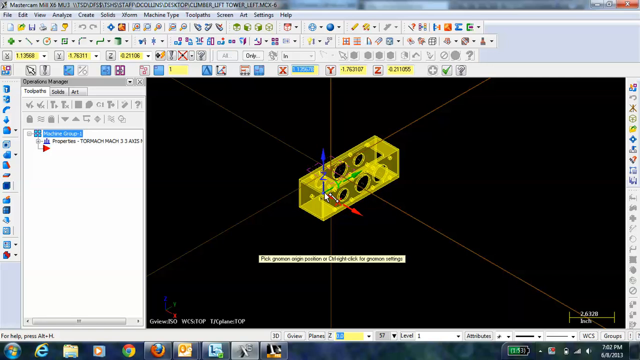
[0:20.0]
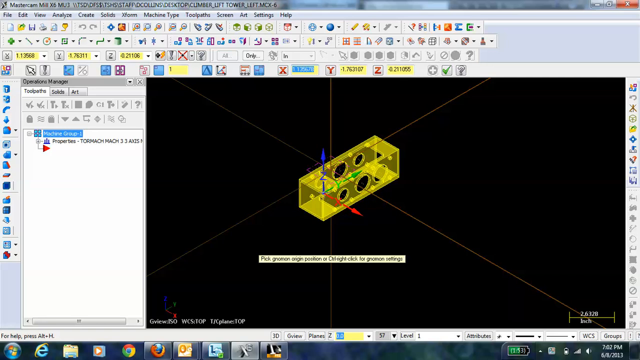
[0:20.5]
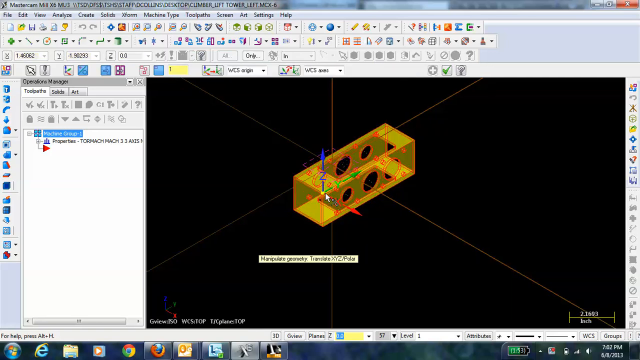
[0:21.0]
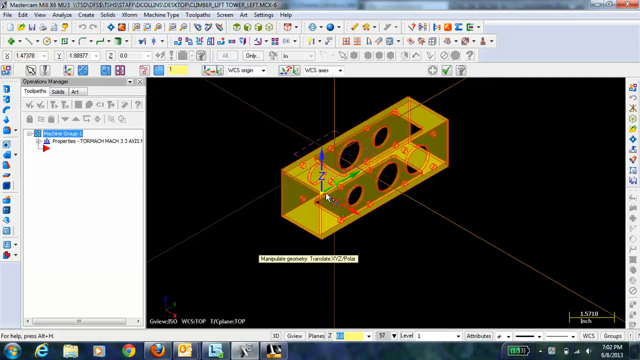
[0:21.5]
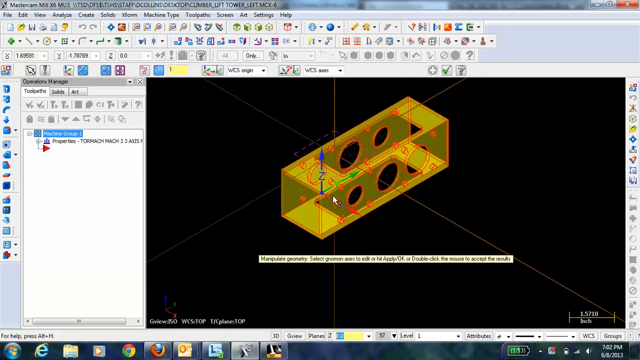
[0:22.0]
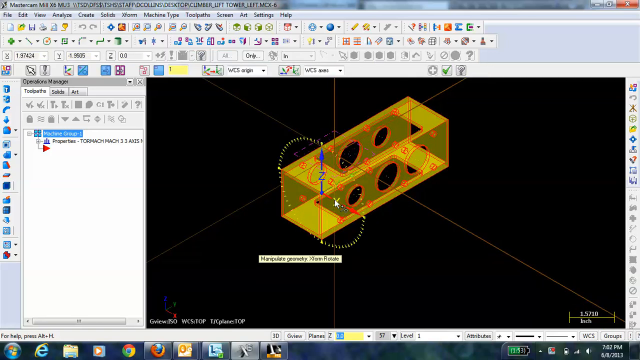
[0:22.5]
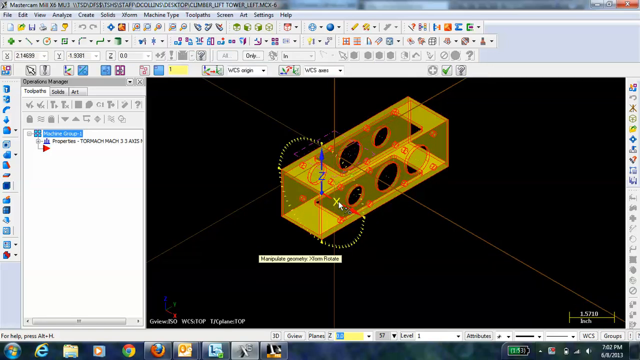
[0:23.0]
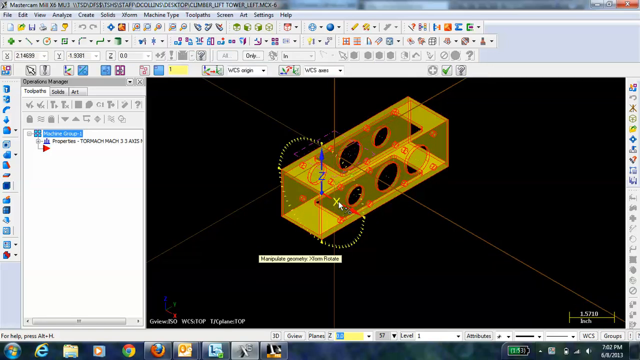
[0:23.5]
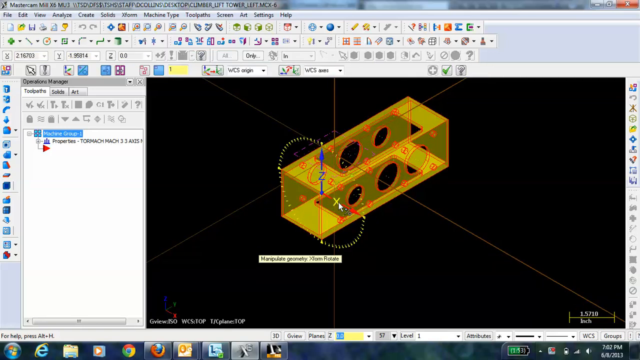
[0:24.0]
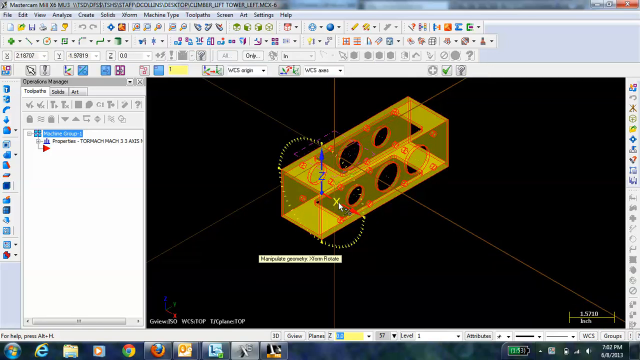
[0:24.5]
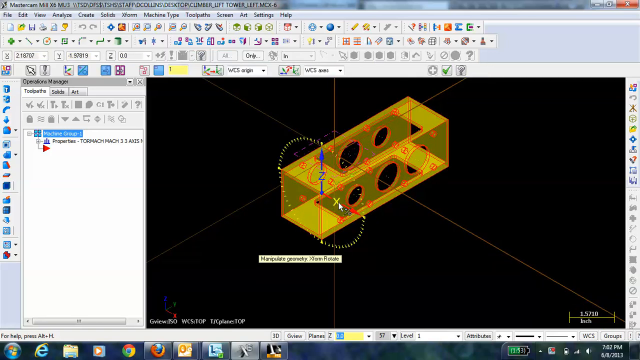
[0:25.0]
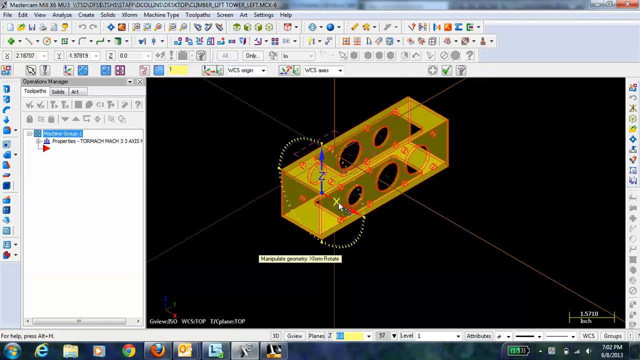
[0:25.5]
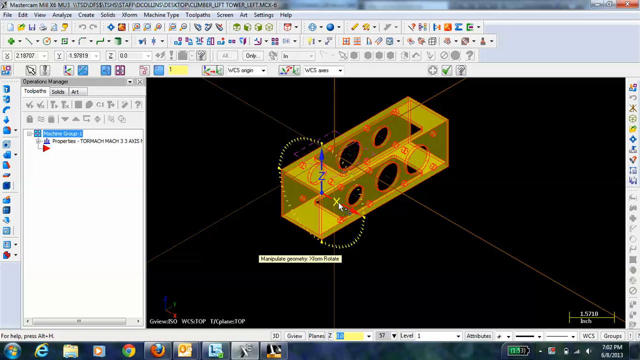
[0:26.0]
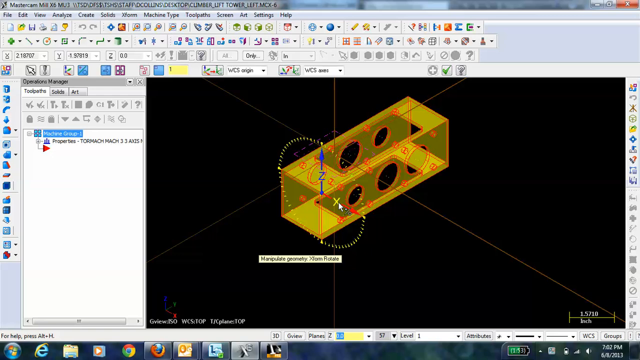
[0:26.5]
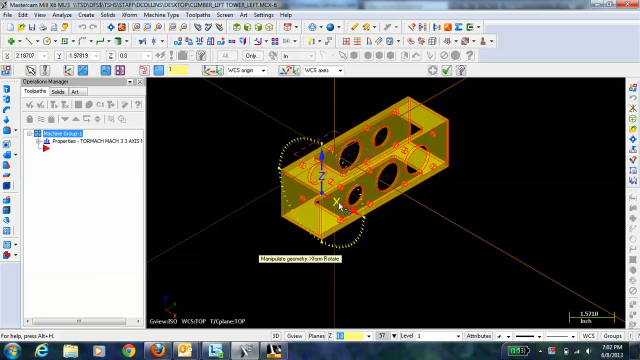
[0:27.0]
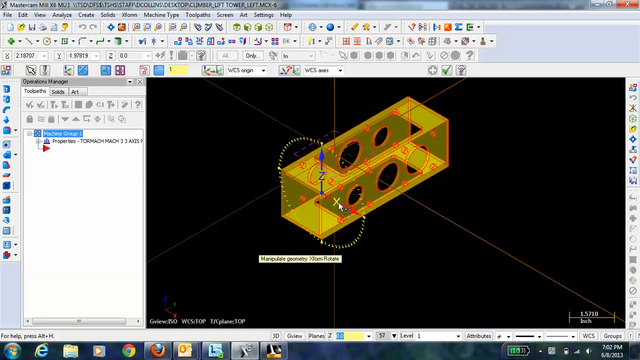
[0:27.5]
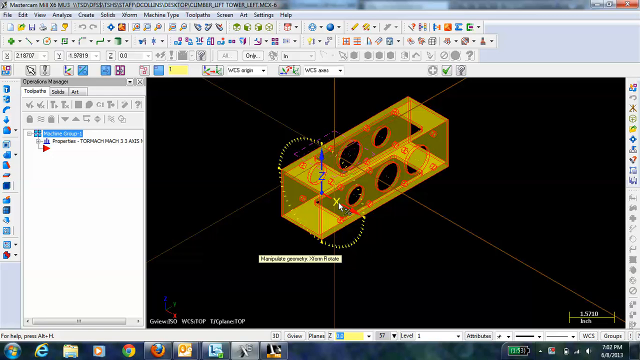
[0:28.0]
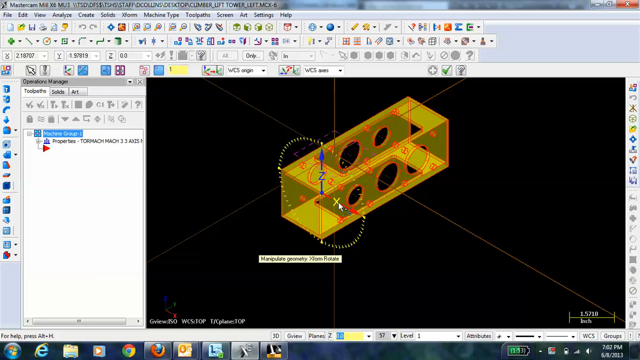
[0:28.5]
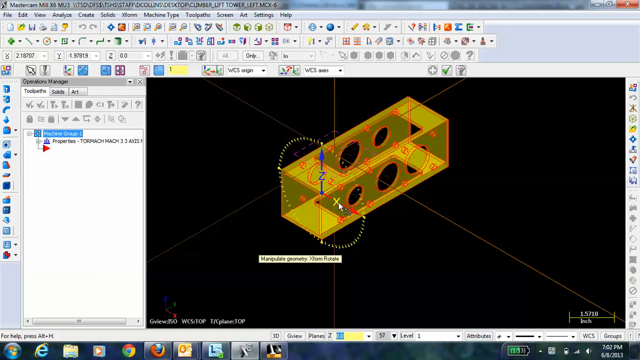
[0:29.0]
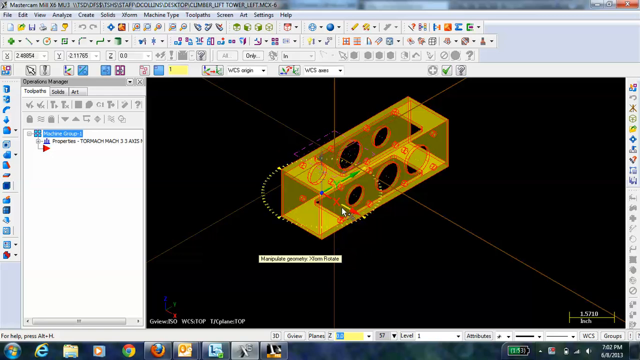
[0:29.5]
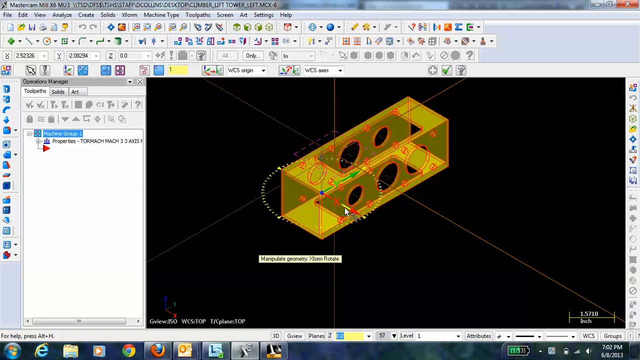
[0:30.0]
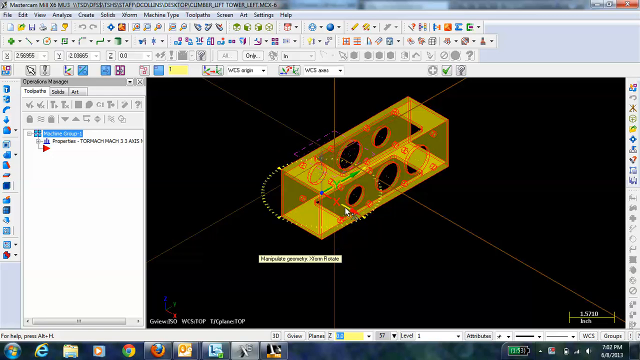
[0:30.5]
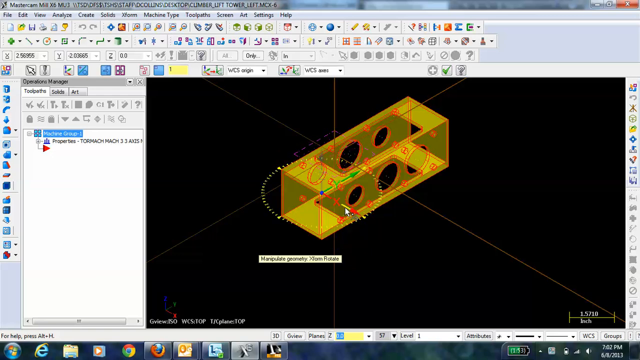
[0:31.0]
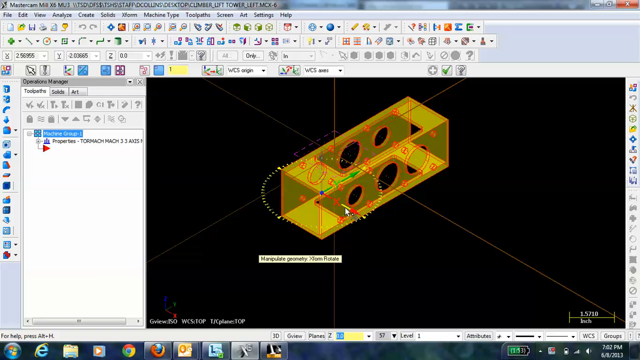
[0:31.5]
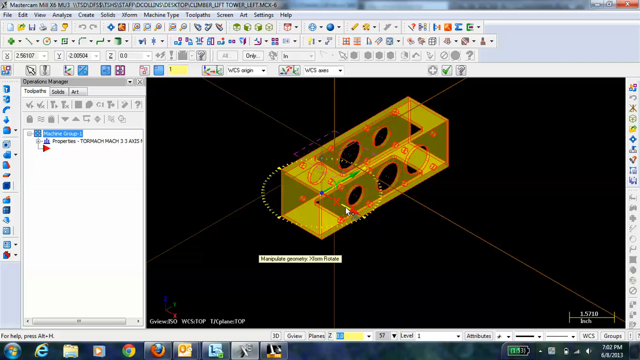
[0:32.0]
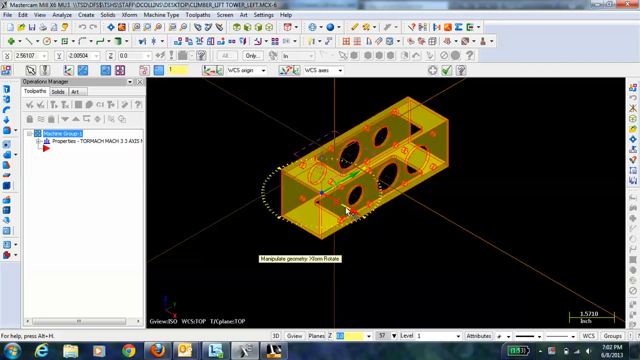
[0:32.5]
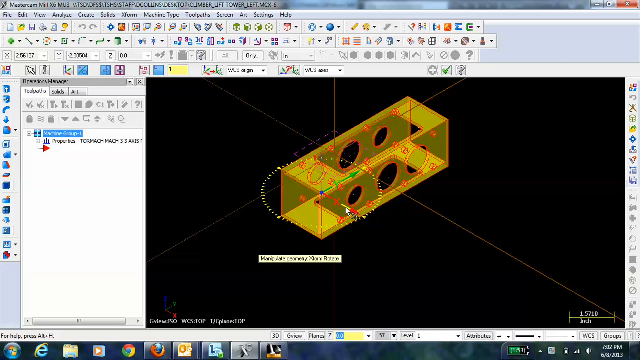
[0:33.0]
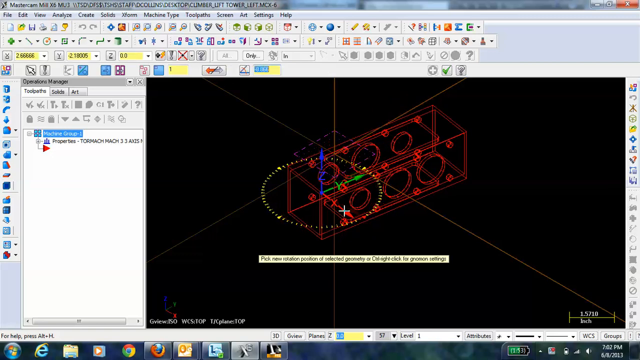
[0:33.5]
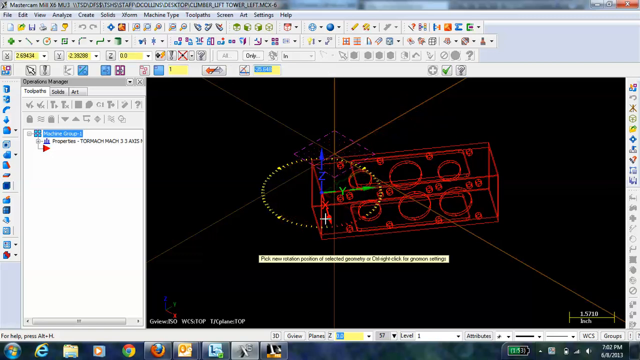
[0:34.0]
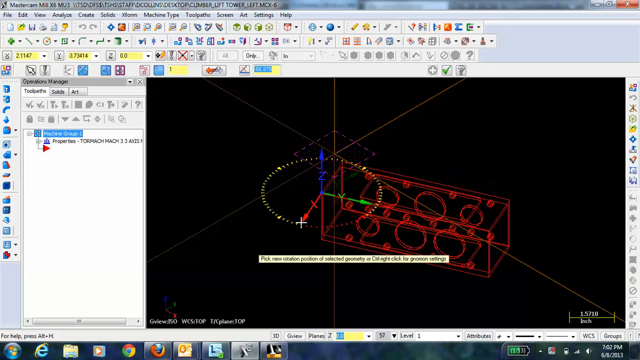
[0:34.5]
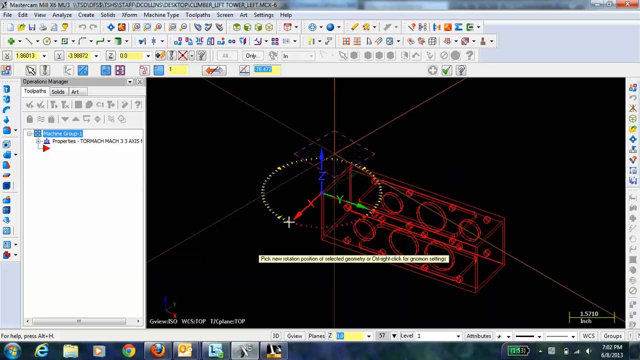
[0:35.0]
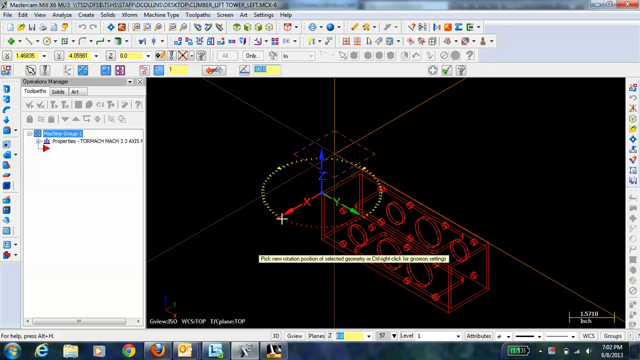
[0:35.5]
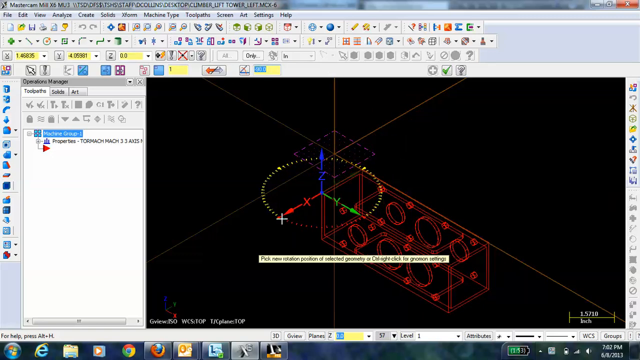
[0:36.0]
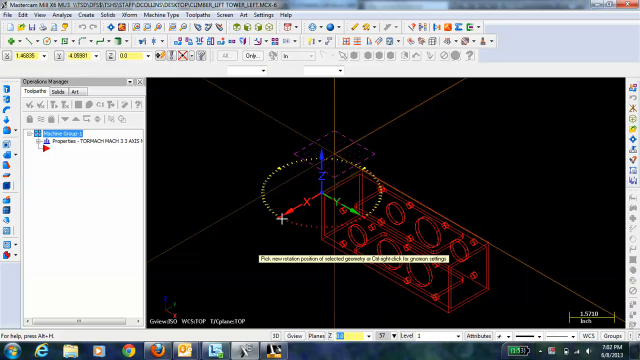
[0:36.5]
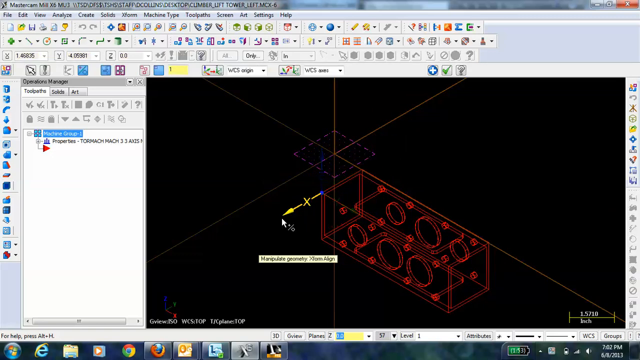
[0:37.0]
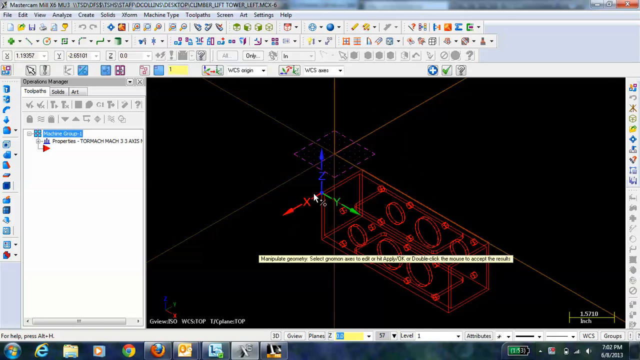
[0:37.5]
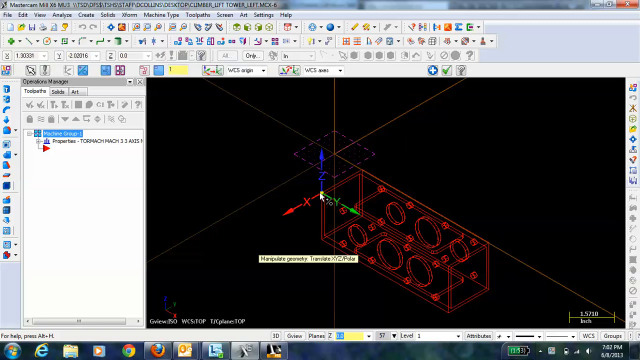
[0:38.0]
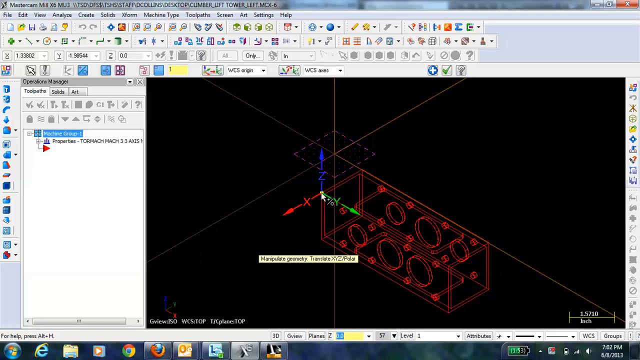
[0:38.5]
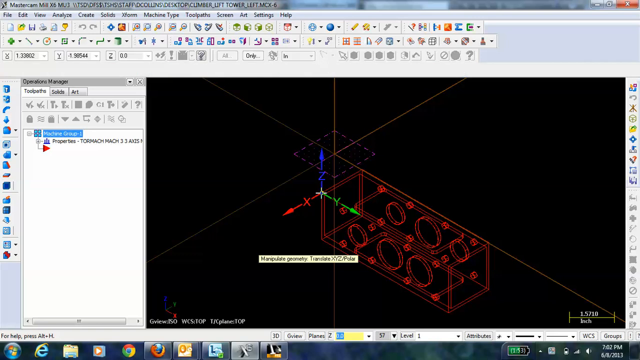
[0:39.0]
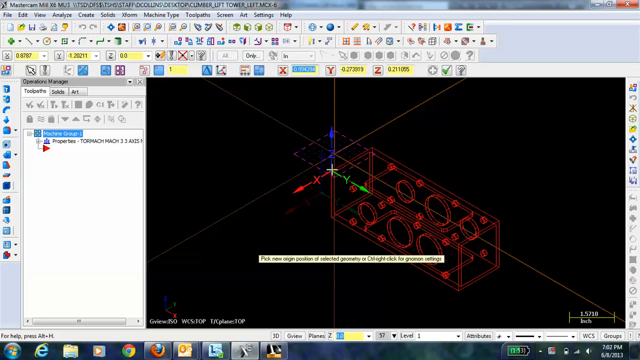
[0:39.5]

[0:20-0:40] The cursor hovers over the yellow box, and text reads "pick gnomon origin position, or Control-Right-Click for gnomon settings." He clicks the box, and the box's outline becomes red. He brings up some kind of measurement meter, and a yellow box appears called "Manipulate Geometry, Translate Along." That brings up a circular sort of meter, apparently the Rotate function, with text reading "transform rotate." He clicks it again, and the Transform Rotate function goes to the other axis, now lying flat. He turns the red box with it. He then clicks the XYZ axis and drags it up, rotates it clockwise, and moves the entire thing up to the upper right, apparently up on the z-axis and right on the x-axis.